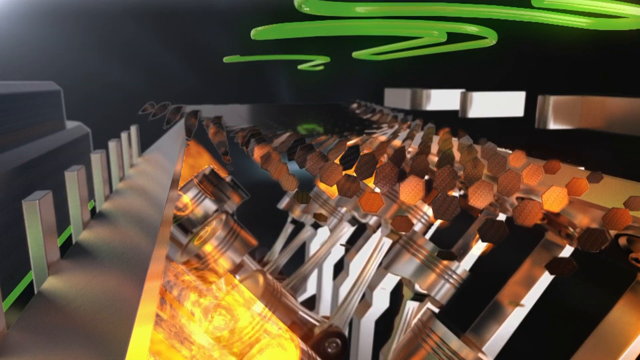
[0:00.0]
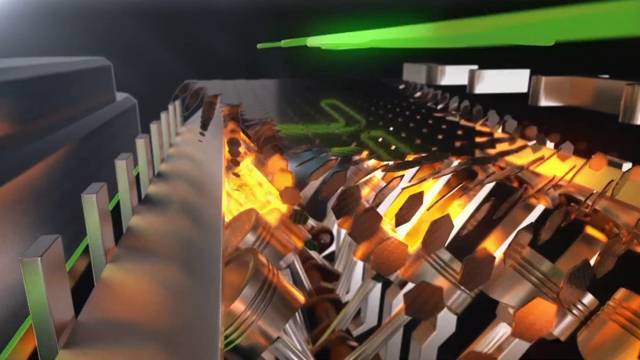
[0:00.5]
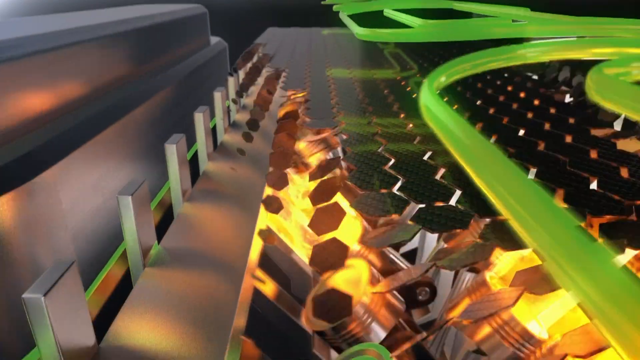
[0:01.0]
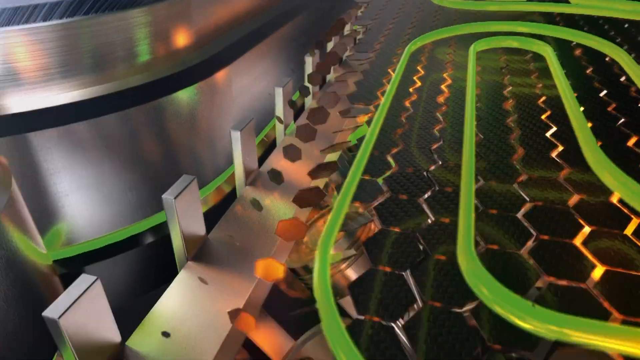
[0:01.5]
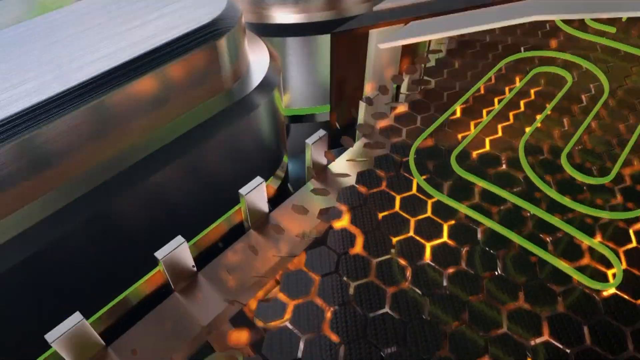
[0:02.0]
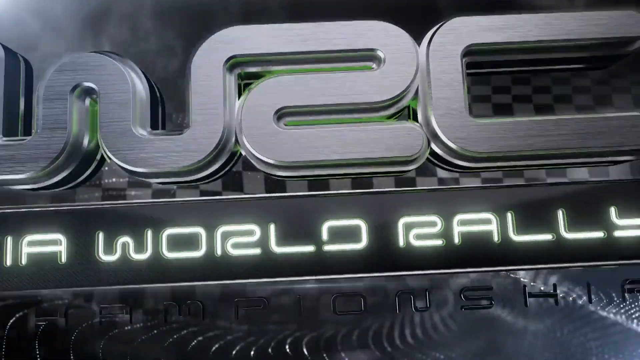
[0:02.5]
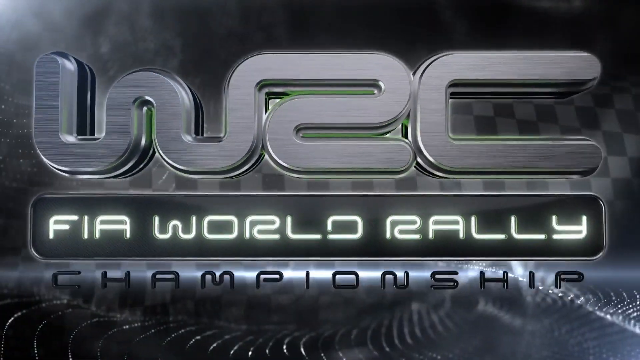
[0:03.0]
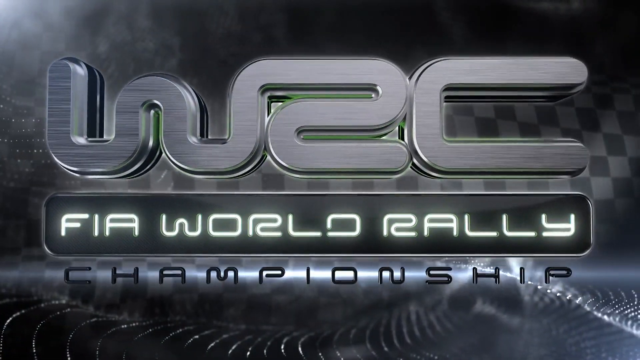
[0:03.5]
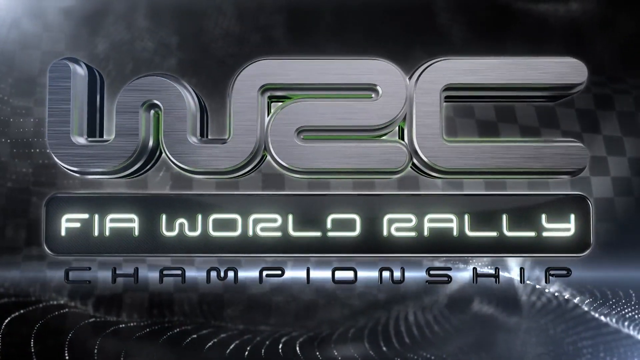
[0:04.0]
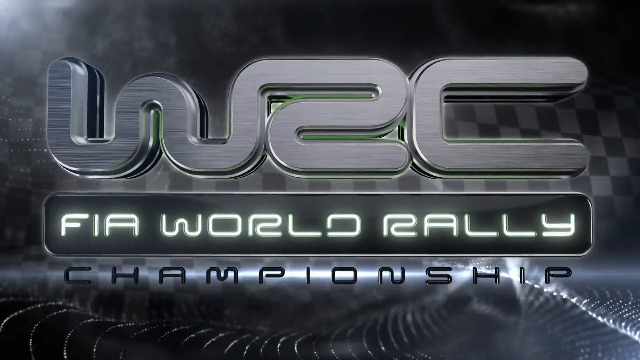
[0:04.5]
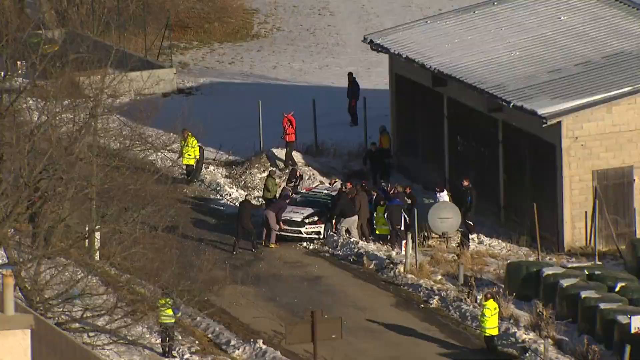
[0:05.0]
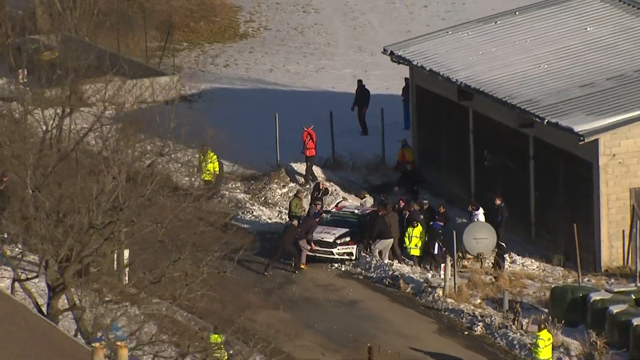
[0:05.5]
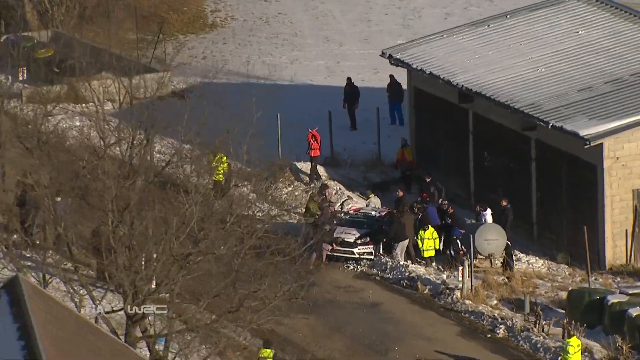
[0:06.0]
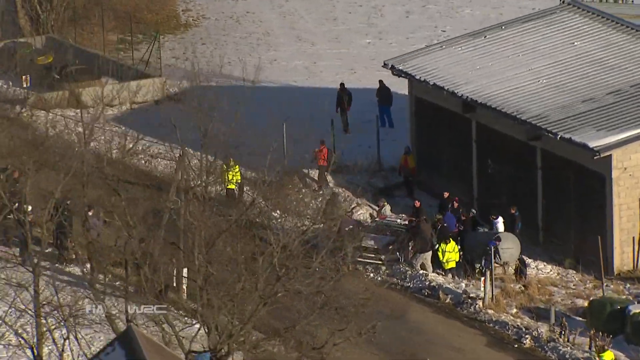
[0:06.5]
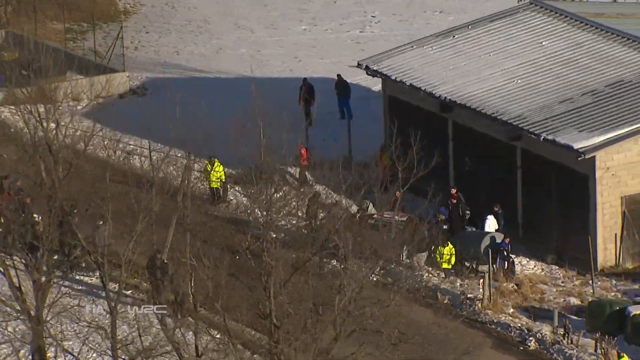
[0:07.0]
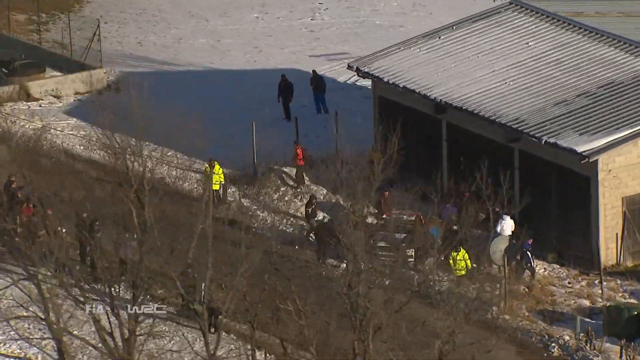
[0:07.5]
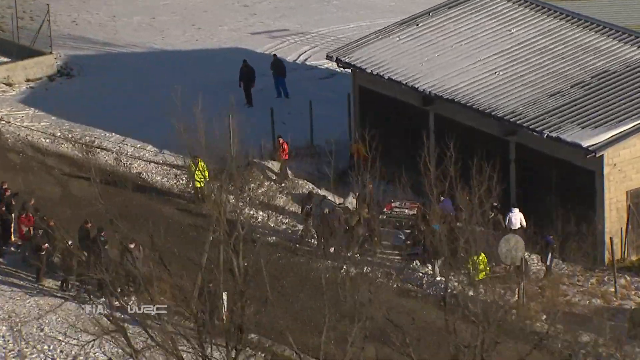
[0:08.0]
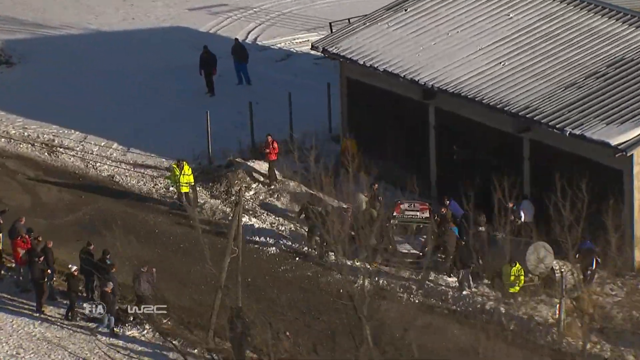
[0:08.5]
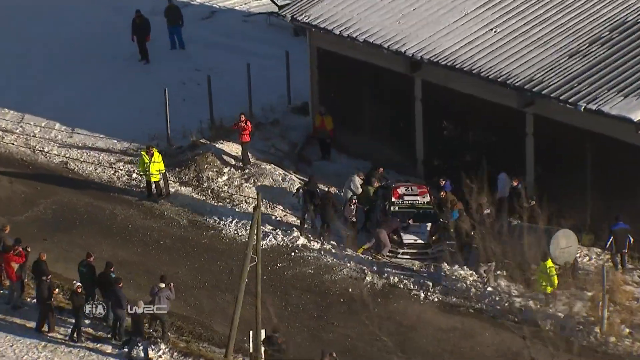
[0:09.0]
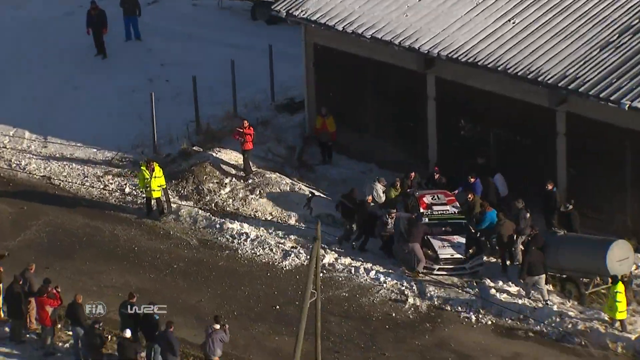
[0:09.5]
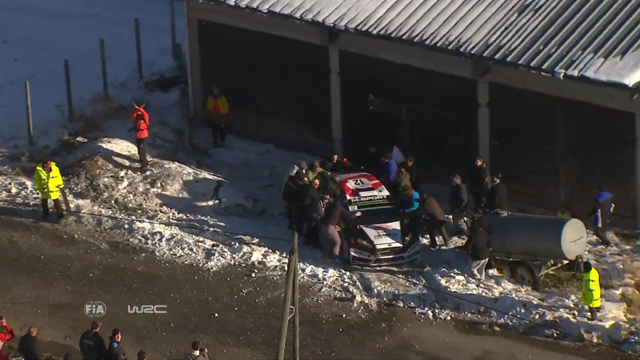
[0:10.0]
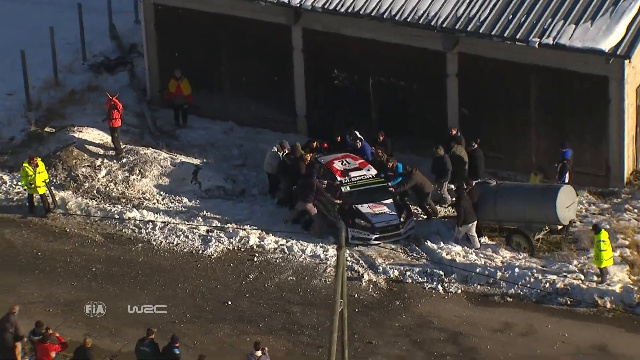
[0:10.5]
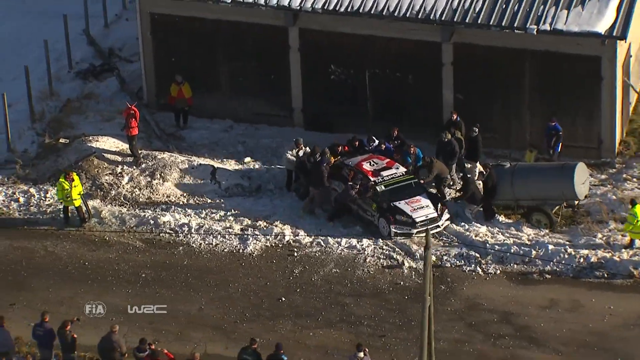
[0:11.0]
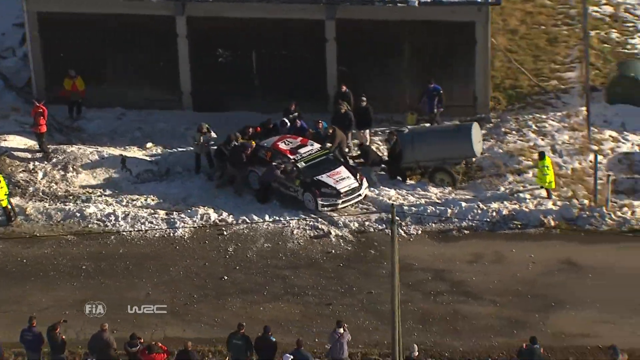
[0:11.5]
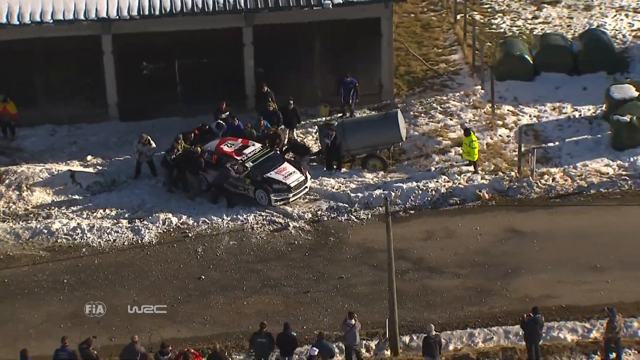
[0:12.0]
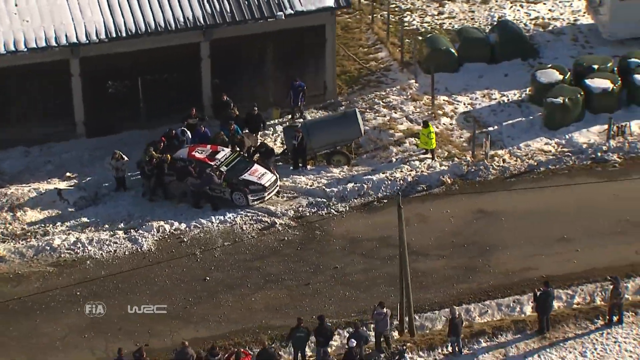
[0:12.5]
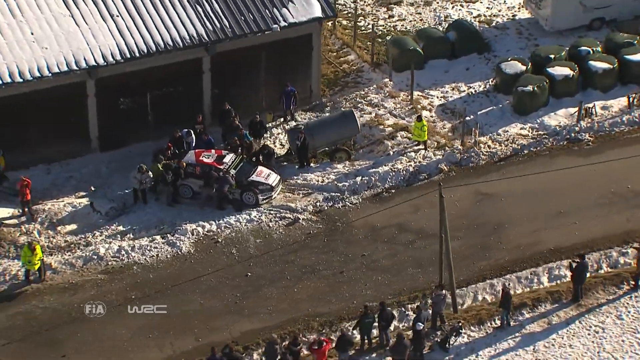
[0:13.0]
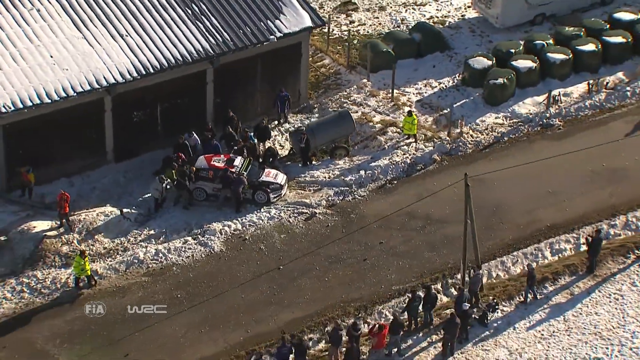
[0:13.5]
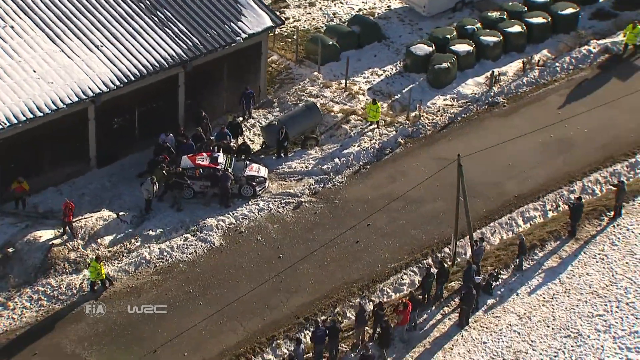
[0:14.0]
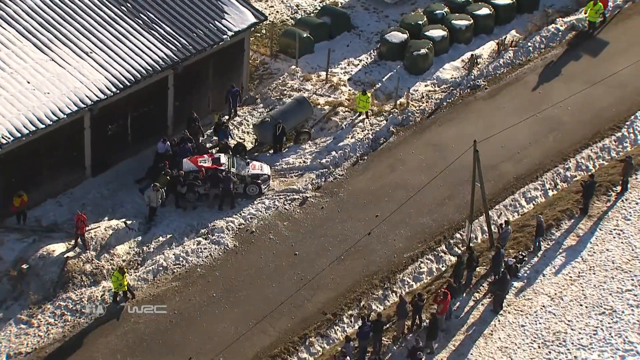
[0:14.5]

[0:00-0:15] The video opens with the words "FIA World Rally Championships." The scene then changes to an aerial view outdoors, where several people surround a car. Some wear bright yellowish-green coats, others wear red, and most appear to be in darker clothing. Panning aerial shots follow the group as they all appear to be pushing the car back onto the road. The car is number 12, black and white with a bunch of sponsorships on it, and its rims are white. At the far left of the scene, a person in a red jacket makes an X symbol toward the camera. At the very bottom of the frame are what appear to be several audience members or people watching the event at the side of the road. As they keep pushing the car, the camera continues to pan toward the left and moves up vertically for different angles and shots of the scene. It appears to be snowy, with a lot of snow on both the left and right sides of the scene and on the roof of a garage, which looks like where the car came out of.